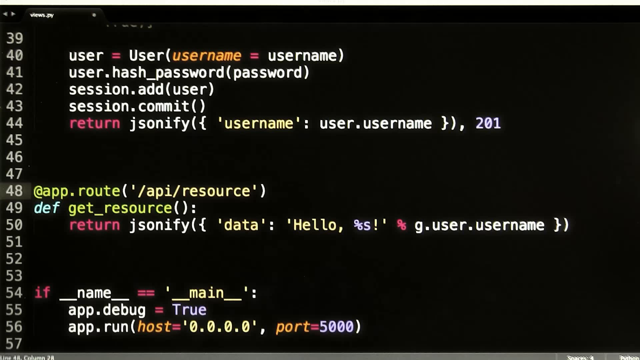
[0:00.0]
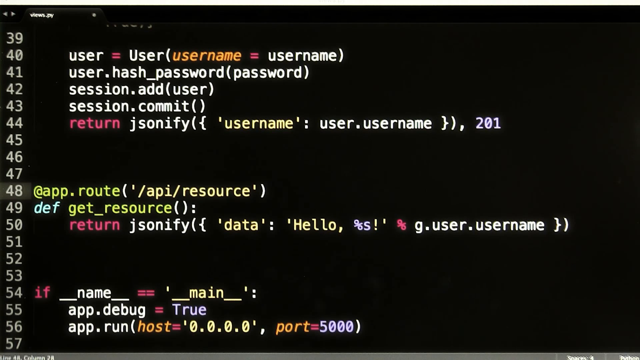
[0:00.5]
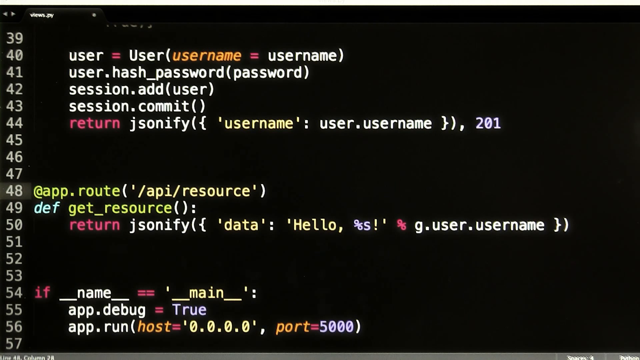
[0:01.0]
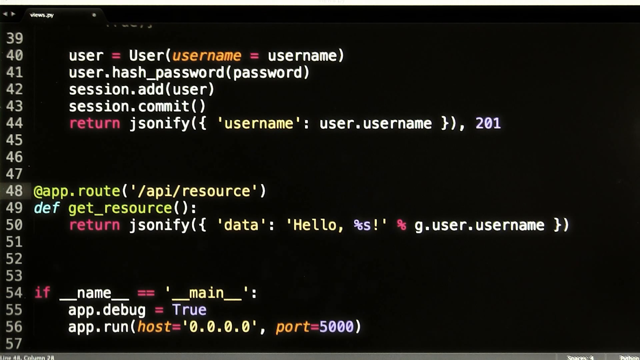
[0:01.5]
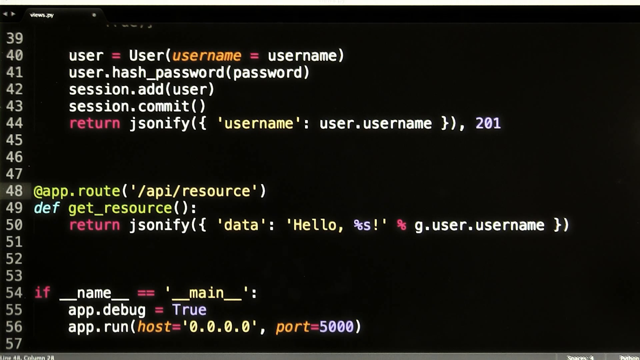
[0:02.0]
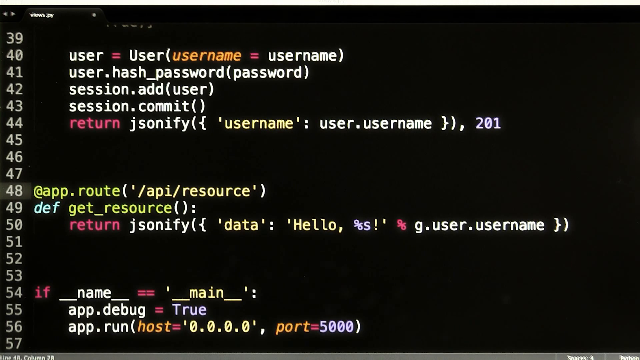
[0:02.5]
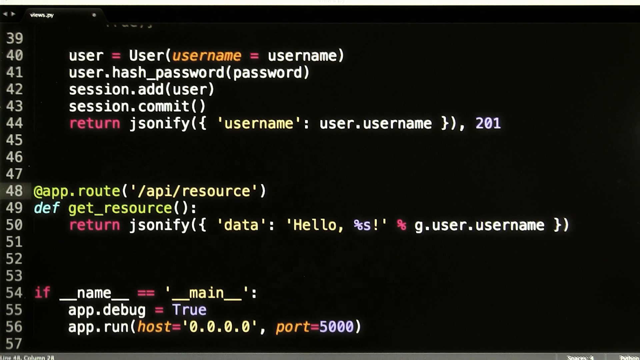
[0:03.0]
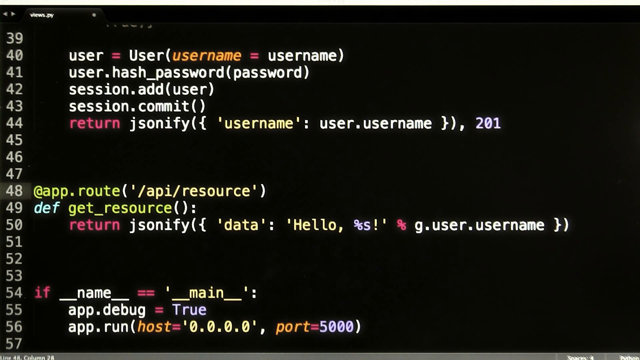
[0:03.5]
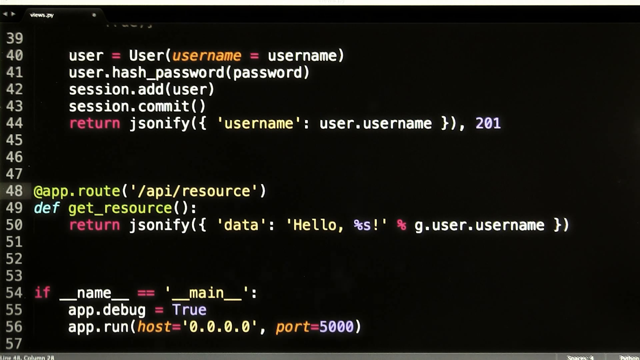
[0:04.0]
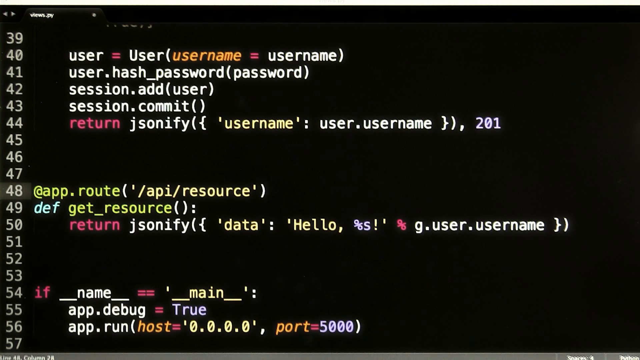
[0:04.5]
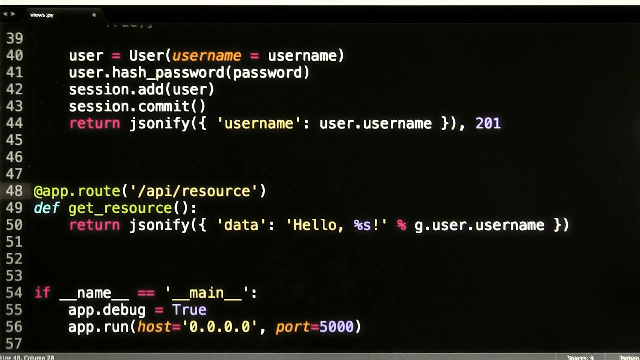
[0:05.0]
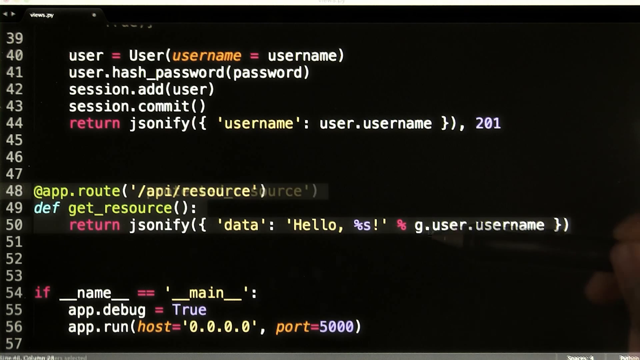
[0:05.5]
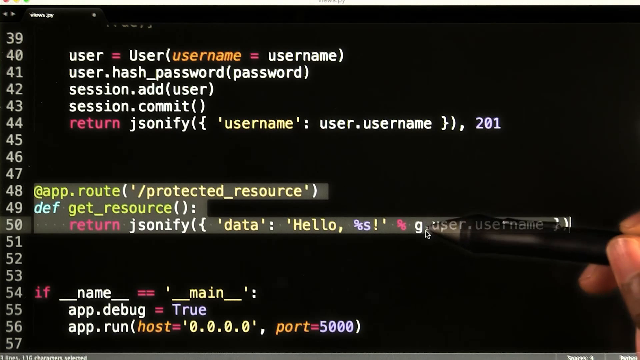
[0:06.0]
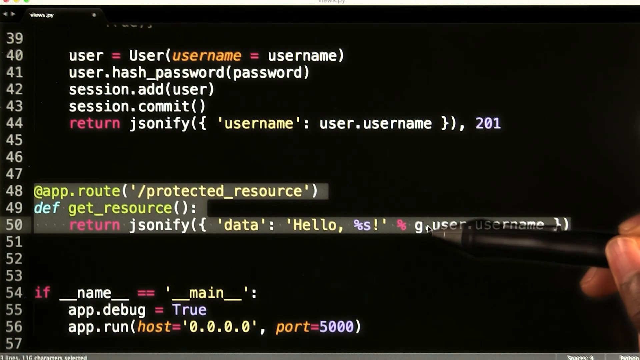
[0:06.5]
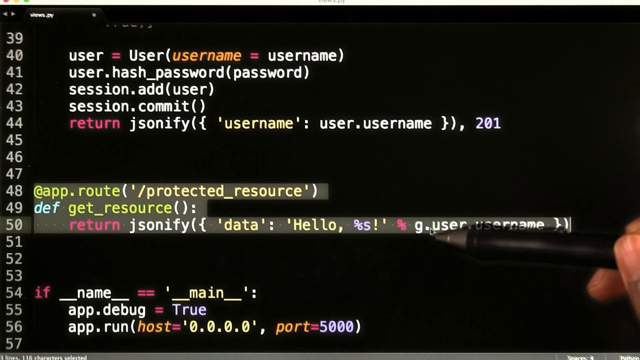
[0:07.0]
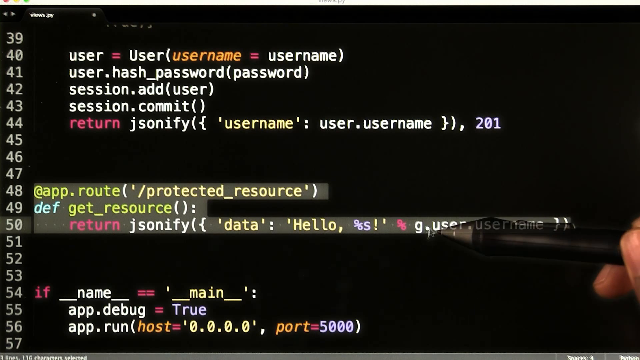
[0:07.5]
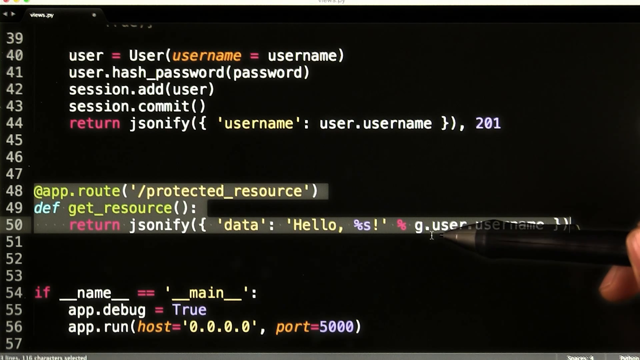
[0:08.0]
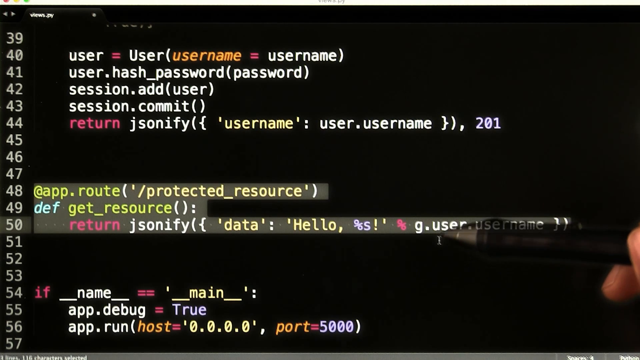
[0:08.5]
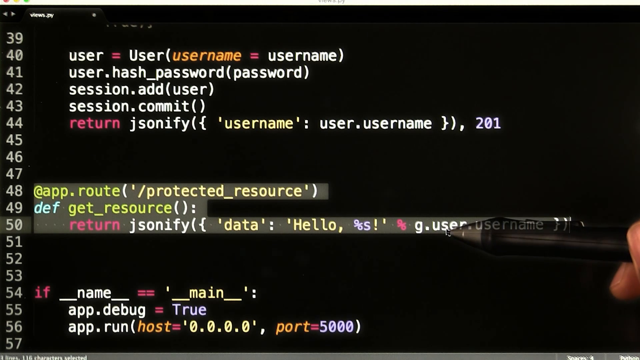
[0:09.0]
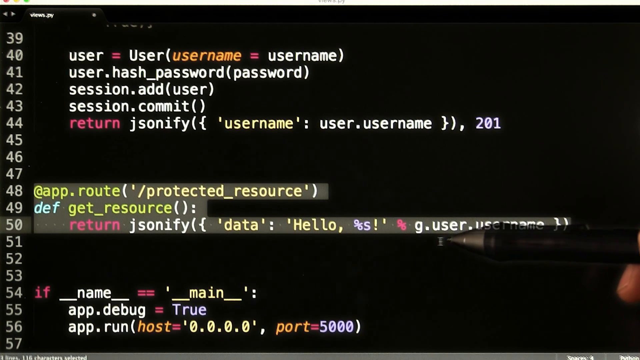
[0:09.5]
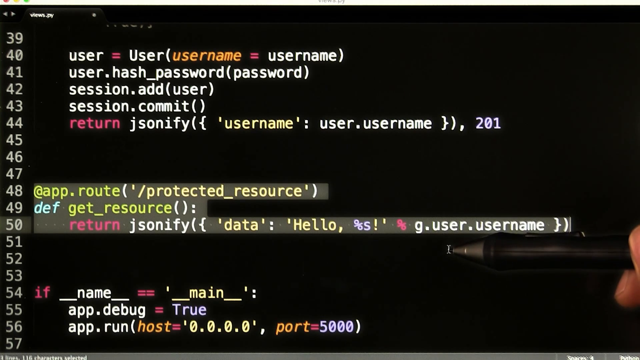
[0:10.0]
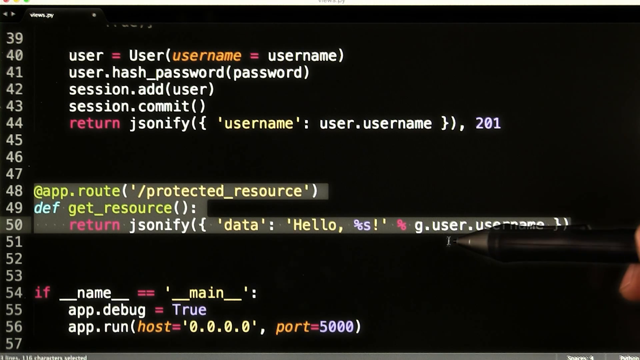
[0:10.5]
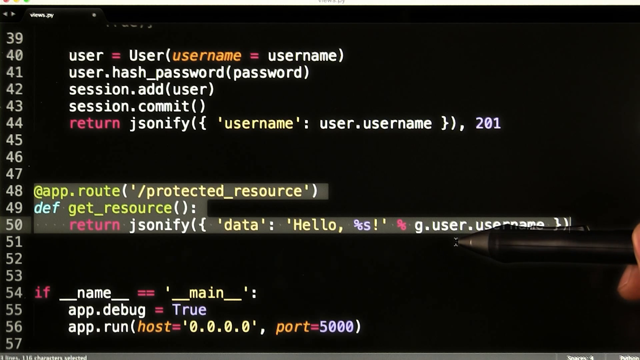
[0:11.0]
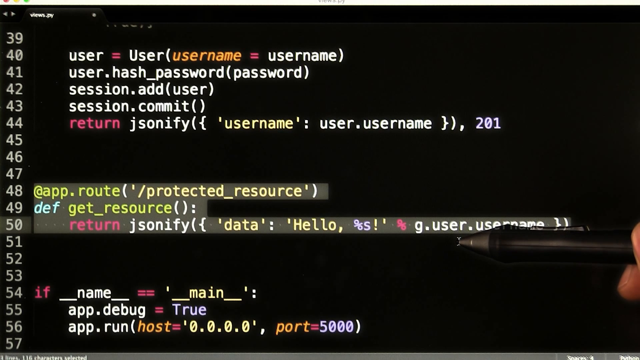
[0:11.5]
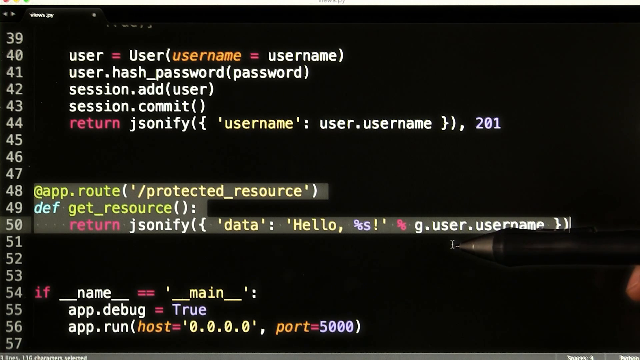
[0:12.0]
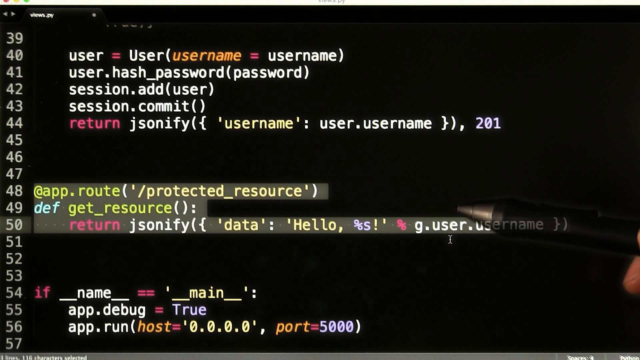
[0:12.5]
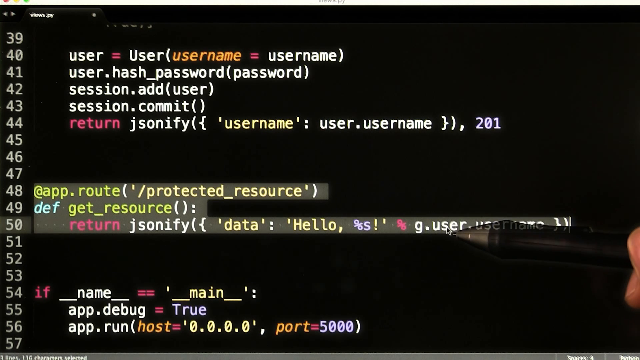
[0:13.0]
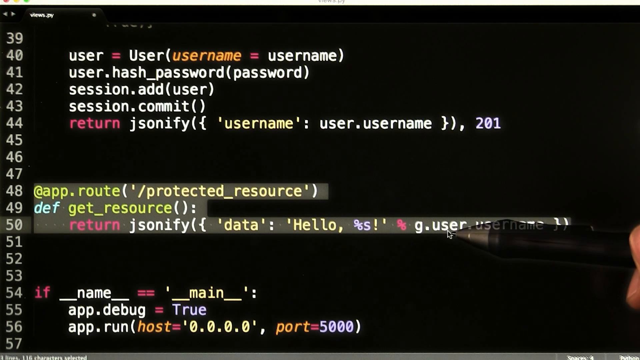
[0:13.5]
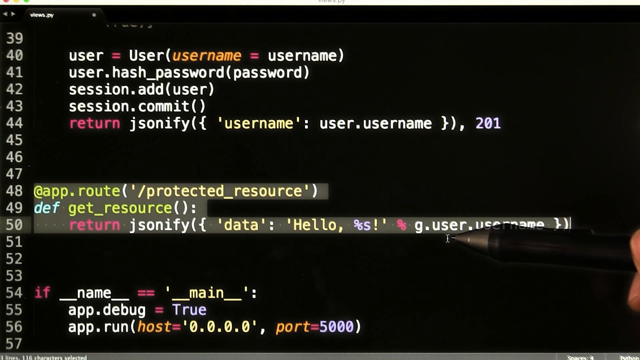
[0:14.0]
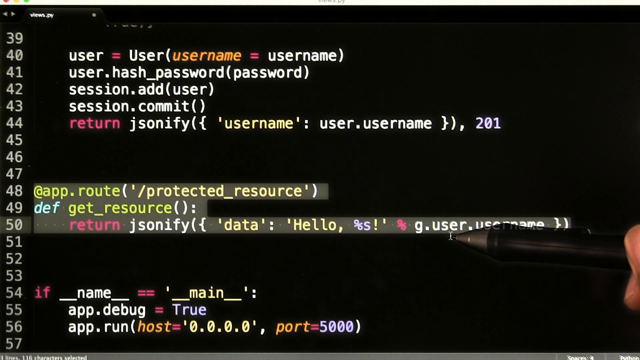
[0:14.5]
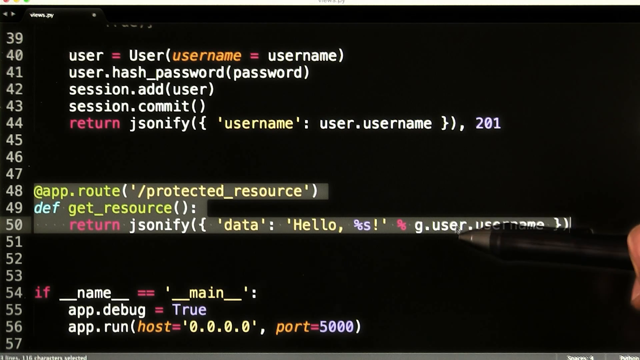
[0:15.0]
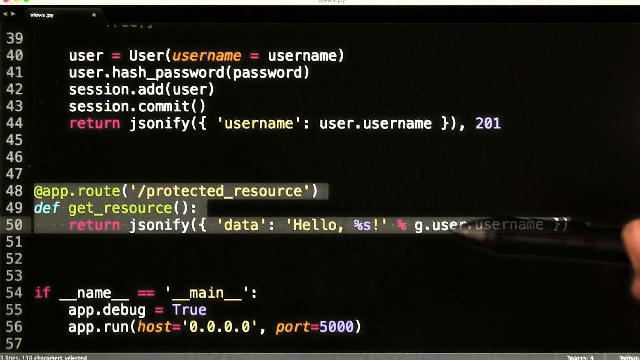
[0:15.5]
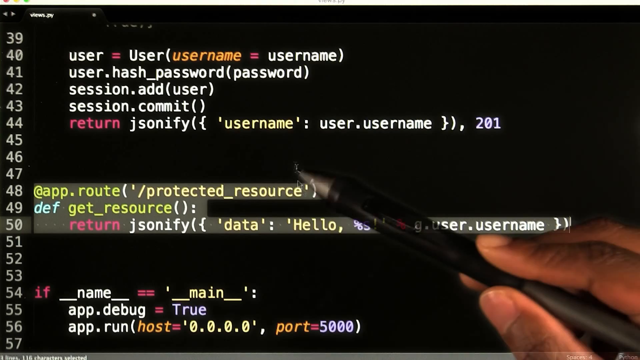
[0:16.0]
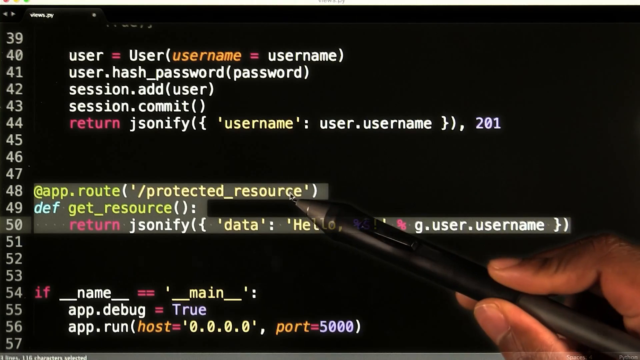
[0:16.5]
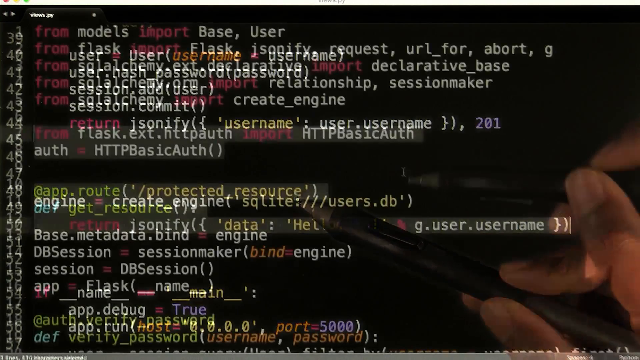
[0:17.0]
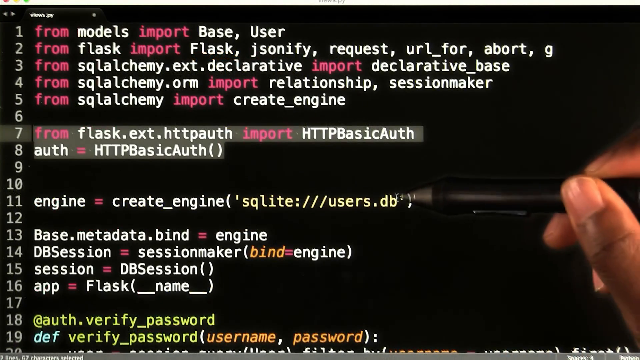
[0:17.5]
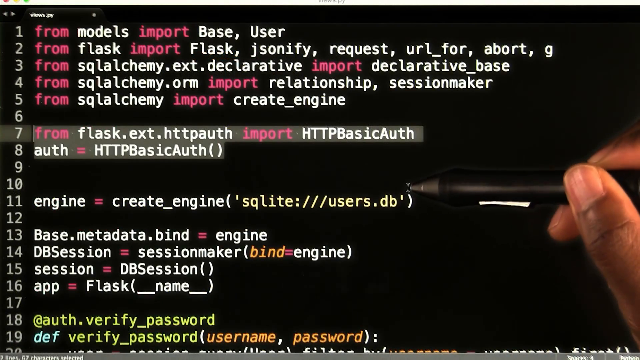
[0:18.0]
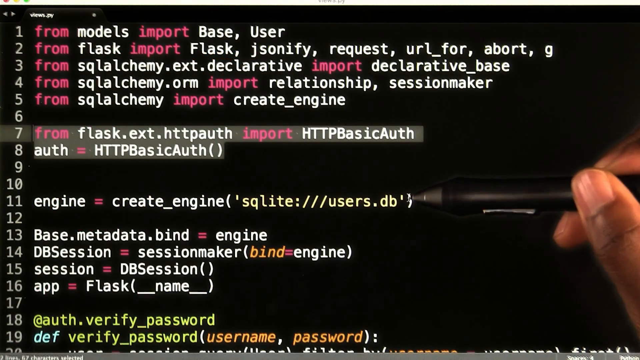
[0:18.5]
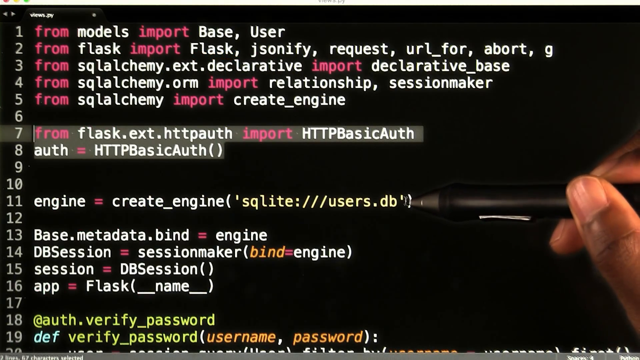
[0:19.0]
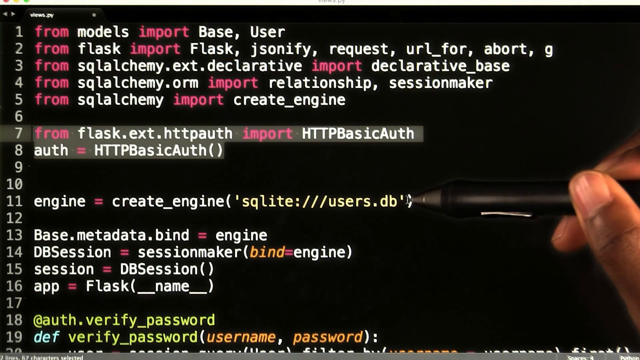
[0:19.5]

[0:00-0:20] A black screen has numbers down the left-hand side running from 39 down to, as far as can be seen, 56. Short lines of writing start at the top: five rows of writing, then a couple of empty lines, three lines of writing, another couple of empty lines, and three more lines of writing. A hand holding a black pen appears from the right-hand side and highlights the middle section of text in grey, so all three of those lines are highlighted in grey, along with the number 50 on the left-hand side right next to that text. The pen then hovers over the "g.user" section and points to the word "resource".